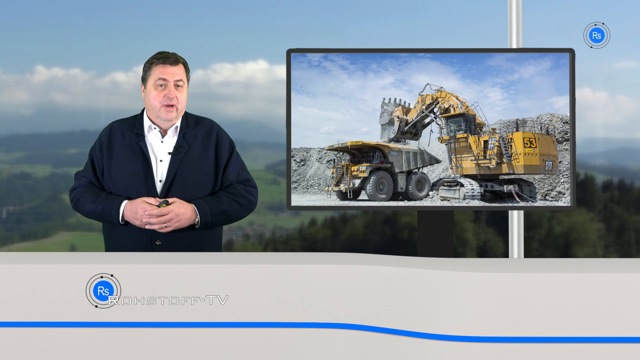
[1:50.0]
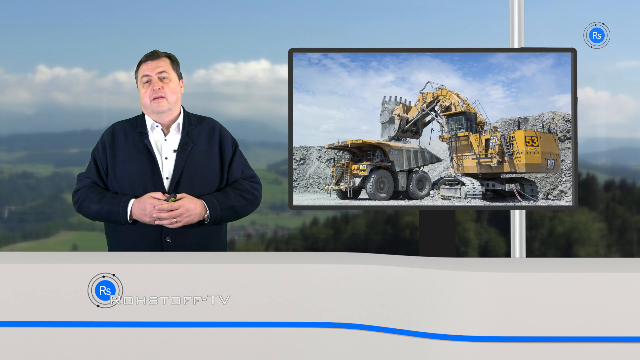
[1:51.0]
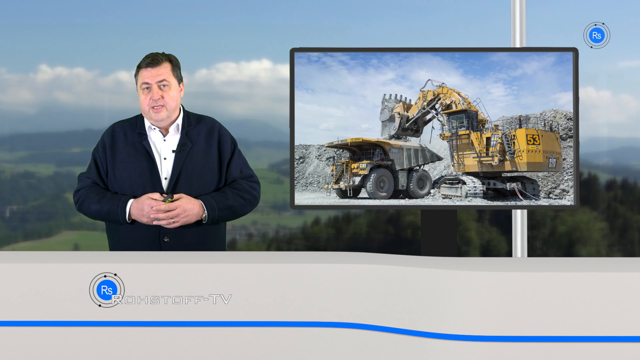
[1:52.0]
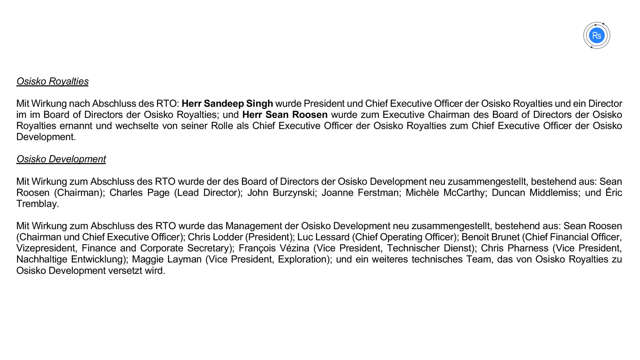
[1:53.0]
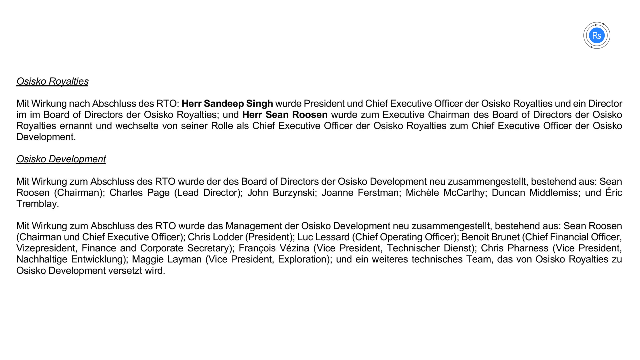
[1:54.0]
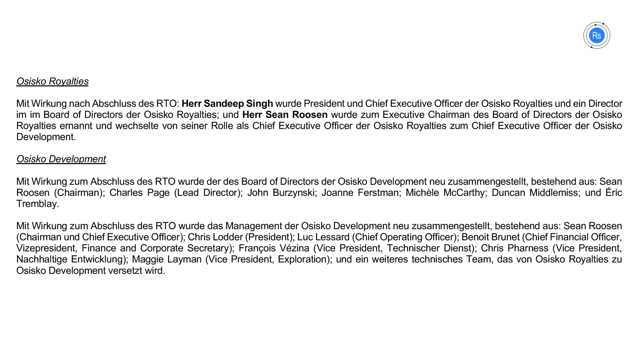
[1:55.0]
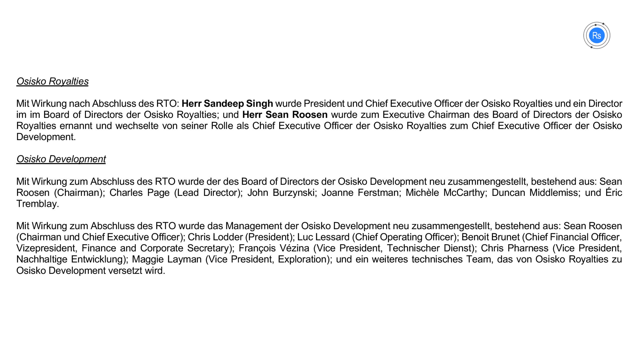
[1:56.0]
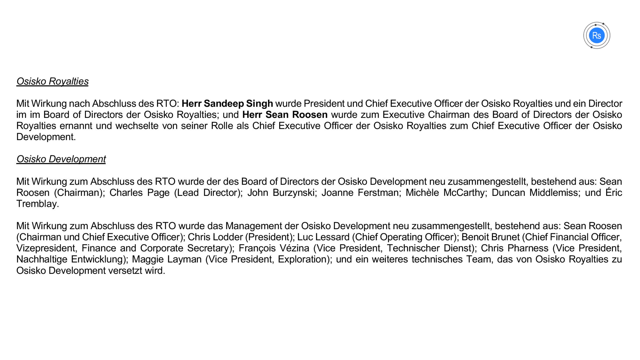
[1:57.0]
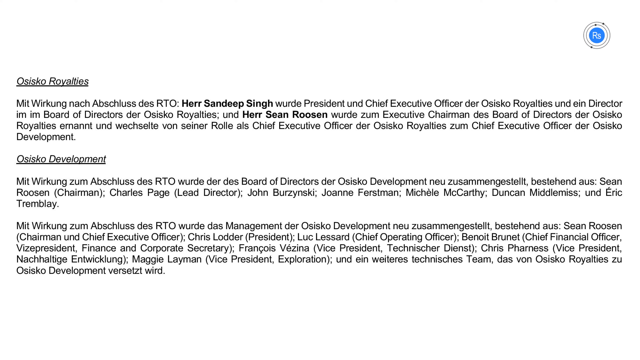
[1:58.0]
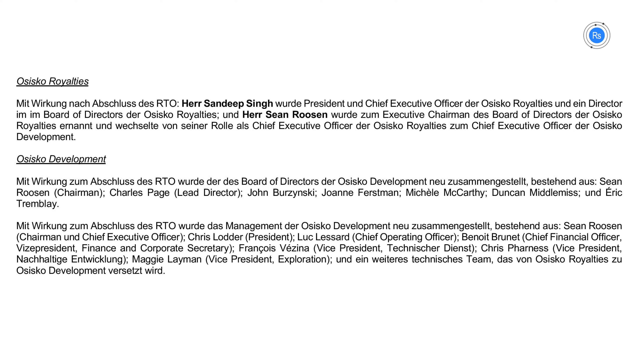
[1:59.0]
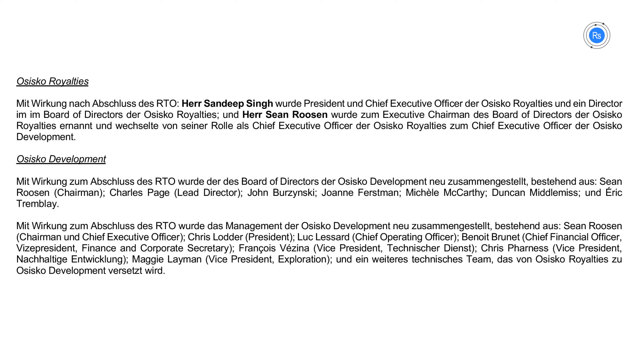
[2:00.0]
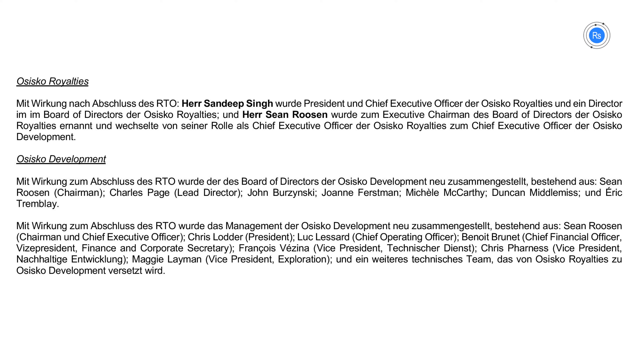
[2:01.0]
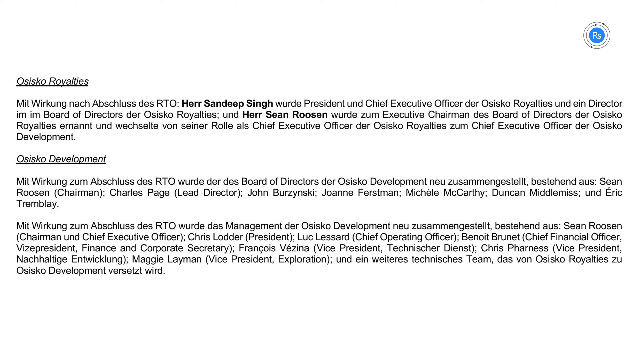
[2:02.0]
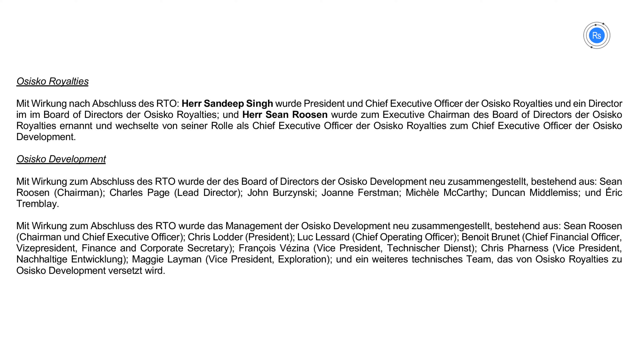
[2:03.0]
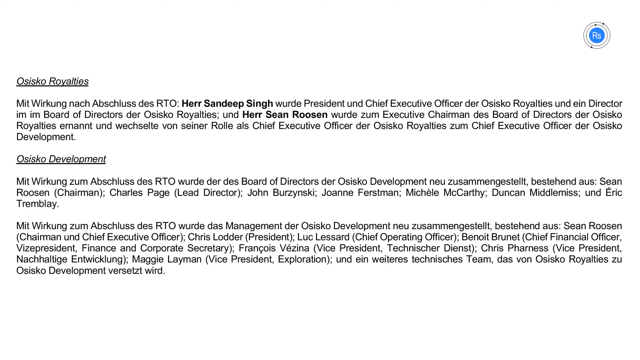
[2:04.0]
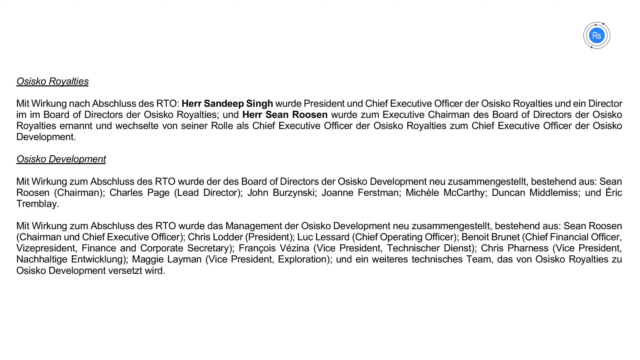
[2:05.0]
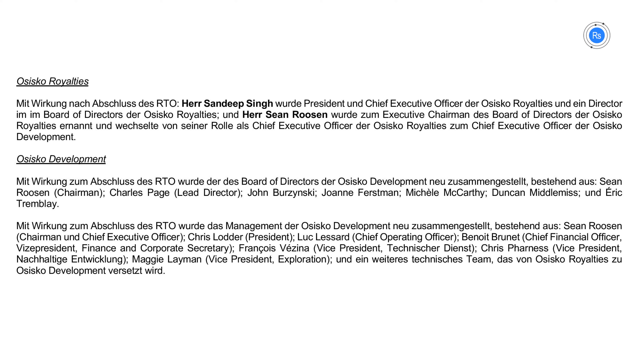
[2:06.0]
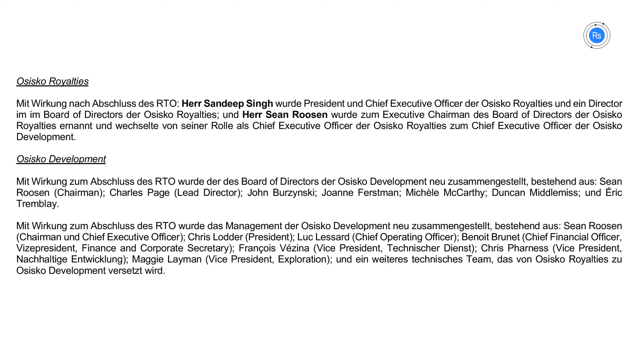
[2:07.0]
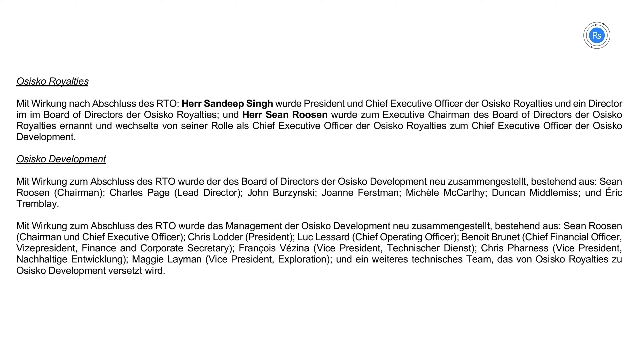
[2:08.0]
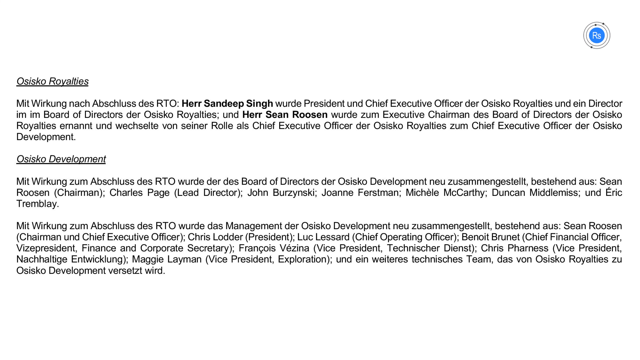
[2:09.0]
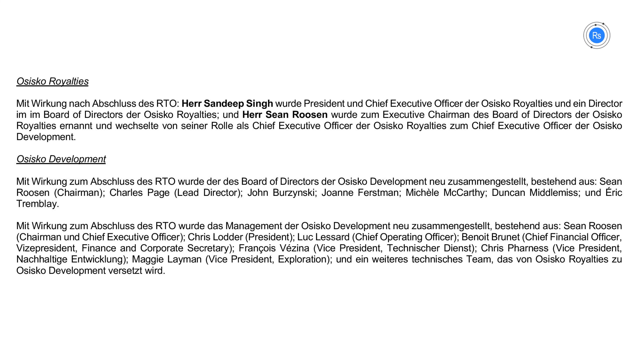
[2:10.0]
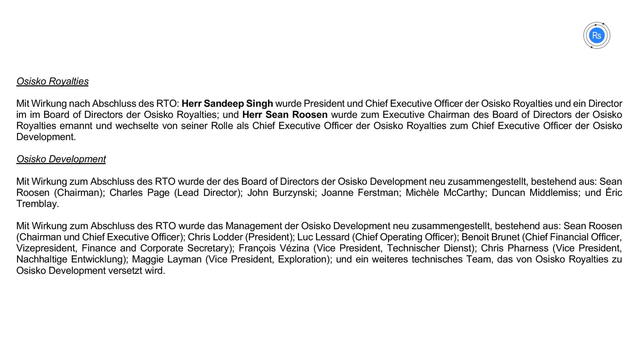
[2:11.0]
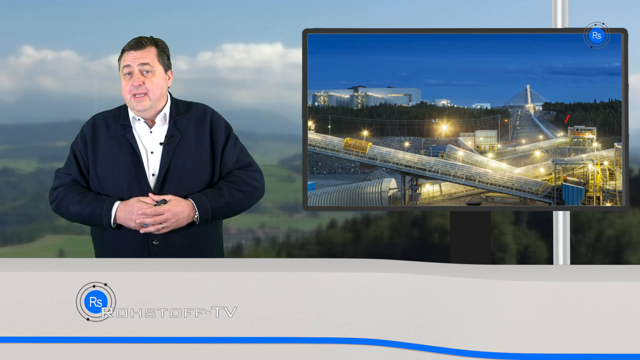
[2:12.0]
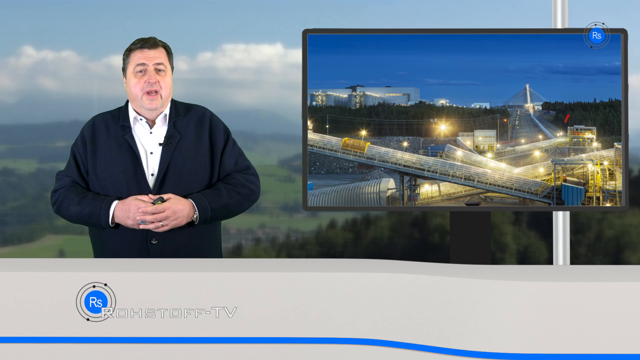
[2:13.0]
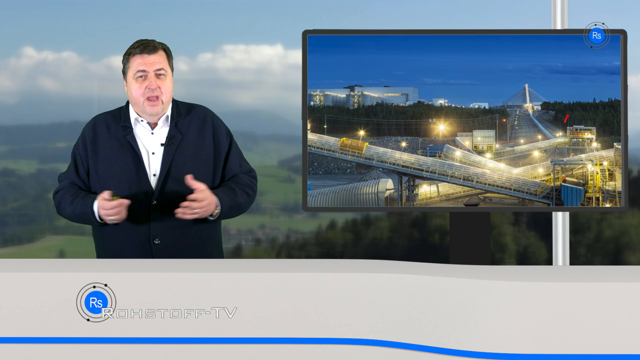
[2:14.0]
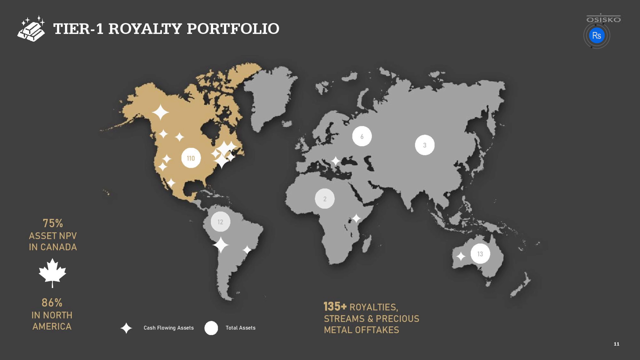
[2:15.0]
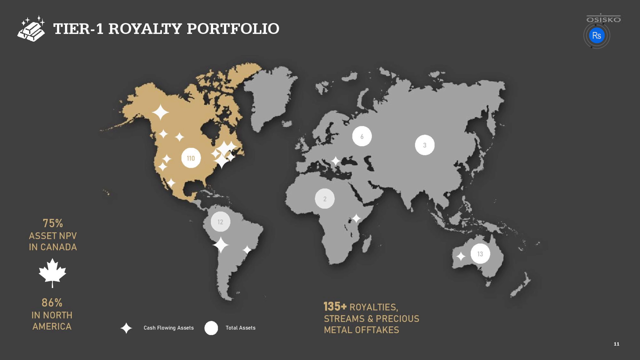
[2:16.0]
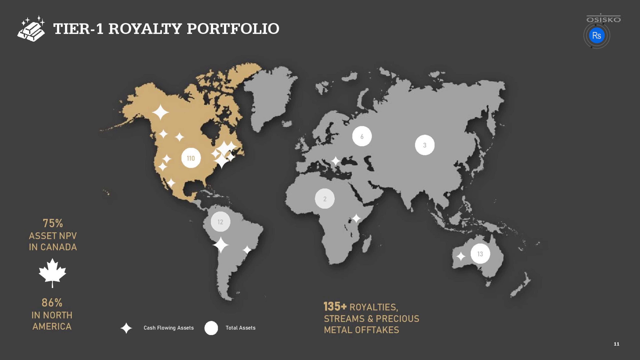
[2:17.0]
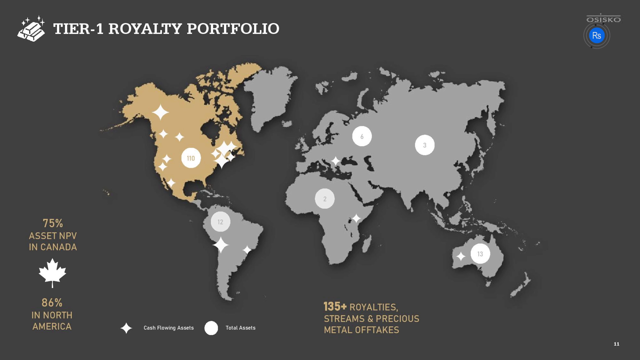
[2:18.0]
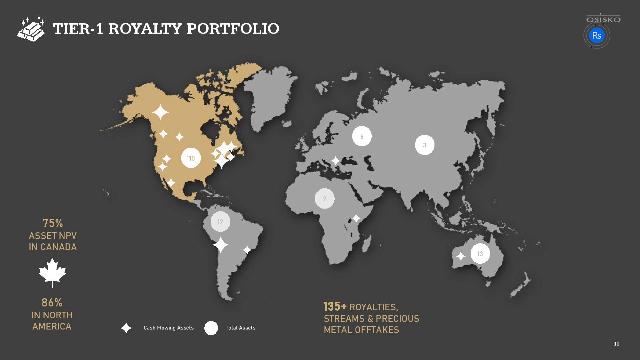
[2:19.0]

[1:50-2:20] Pictures show how the gold is processed: an excavator loads rubble or granite into a truck, and a tractor moves from one location to another. A document, mostly not in English, lists the company's executives: chairman and chief executive officer Chris Luda, chief operating officer Bonito Brunt, a chief financial officer, and lead director John Bruce King.